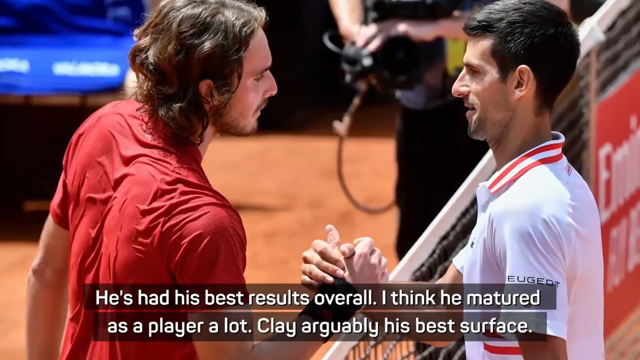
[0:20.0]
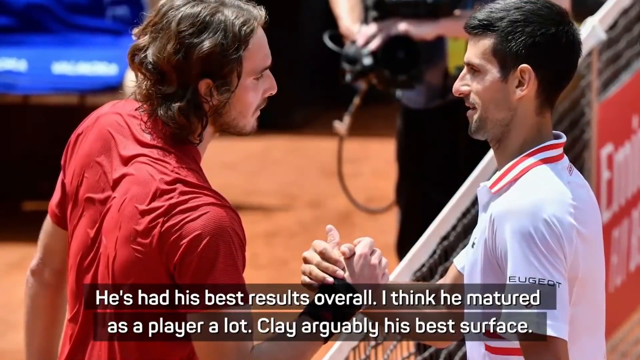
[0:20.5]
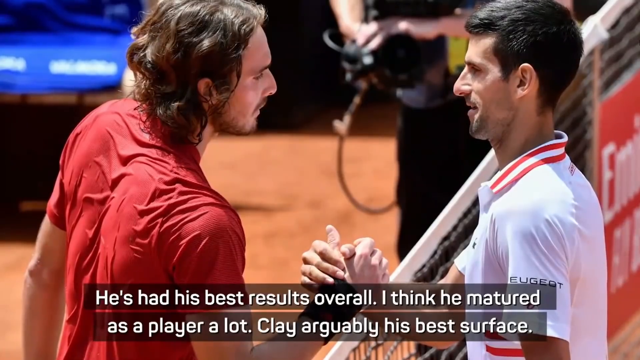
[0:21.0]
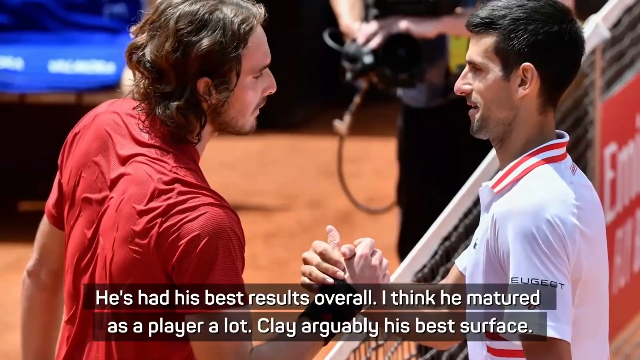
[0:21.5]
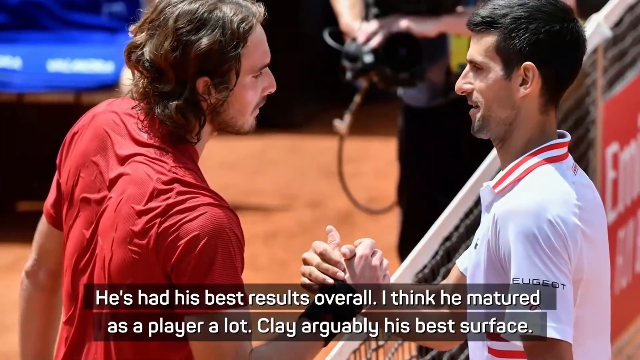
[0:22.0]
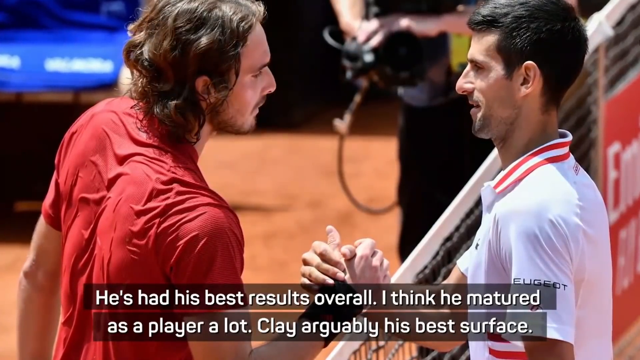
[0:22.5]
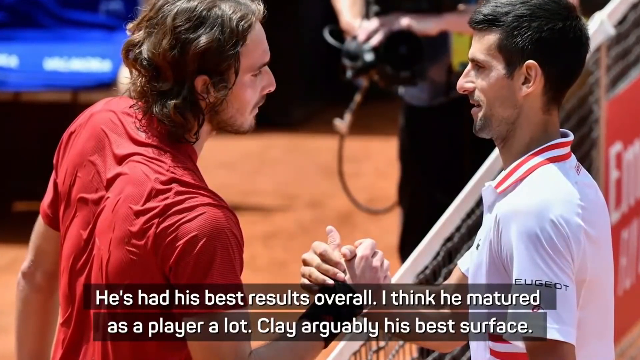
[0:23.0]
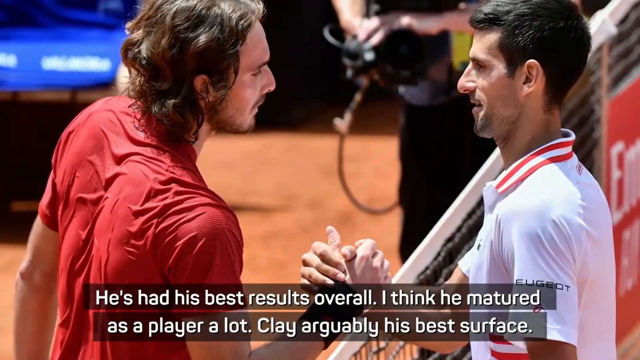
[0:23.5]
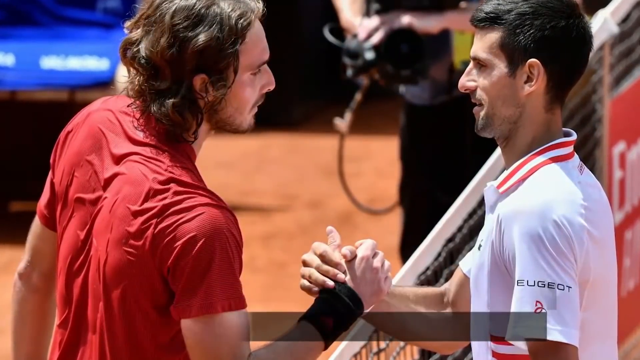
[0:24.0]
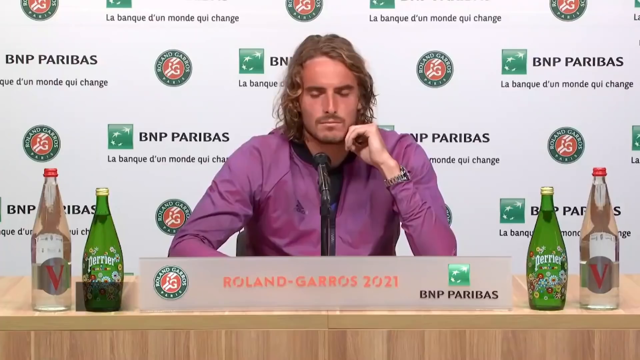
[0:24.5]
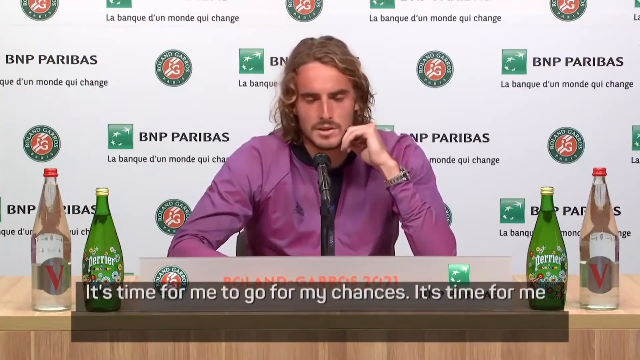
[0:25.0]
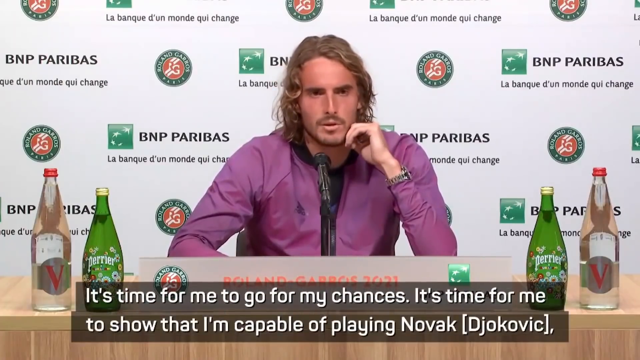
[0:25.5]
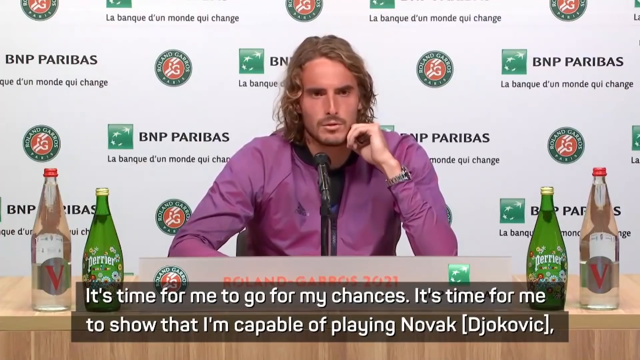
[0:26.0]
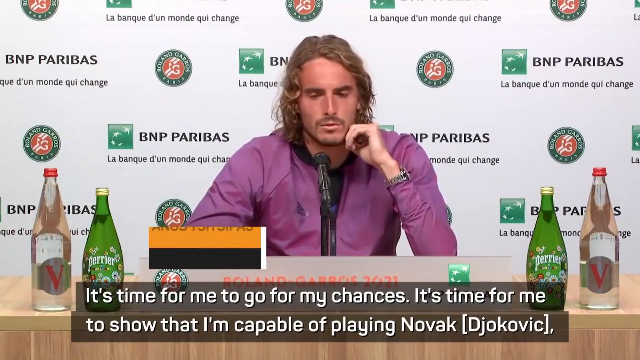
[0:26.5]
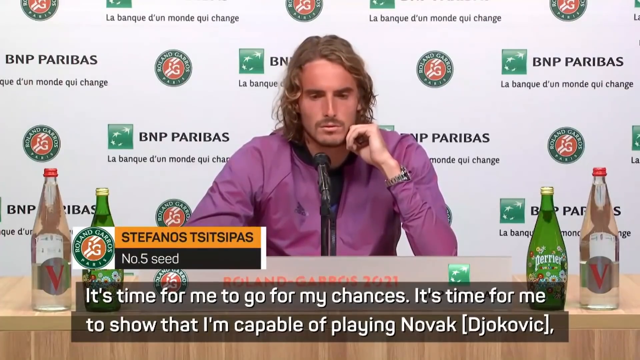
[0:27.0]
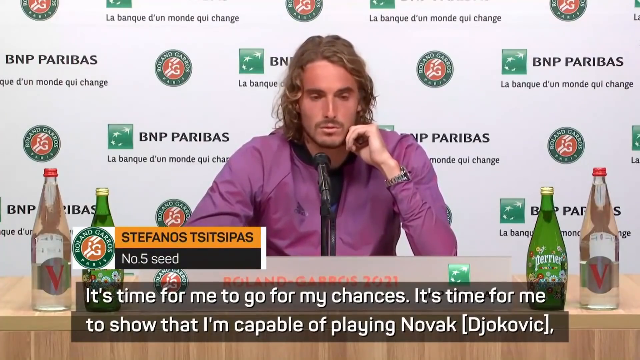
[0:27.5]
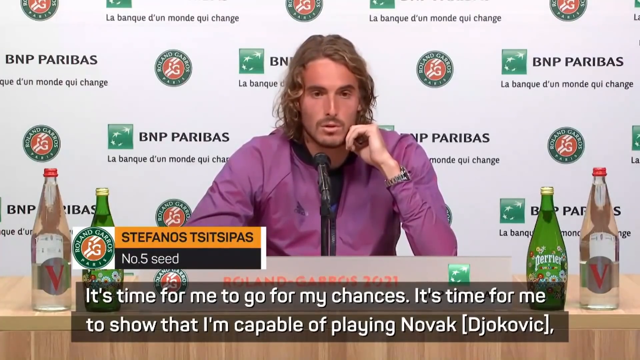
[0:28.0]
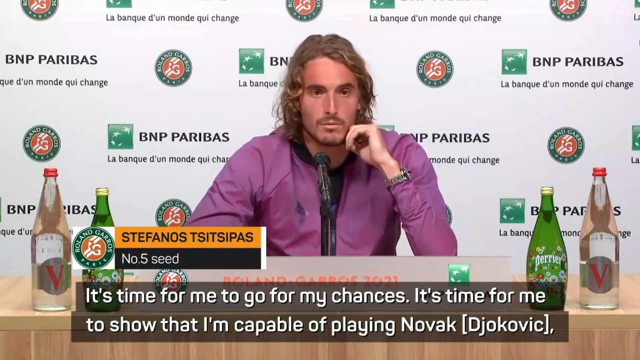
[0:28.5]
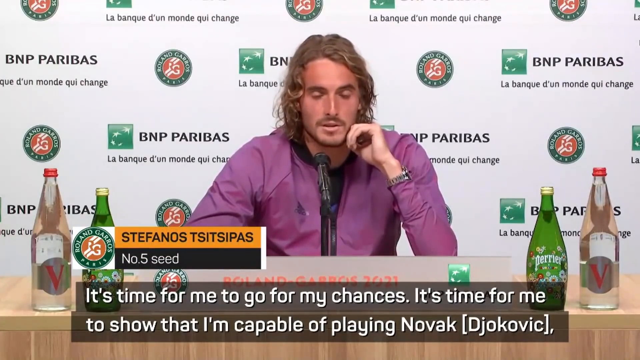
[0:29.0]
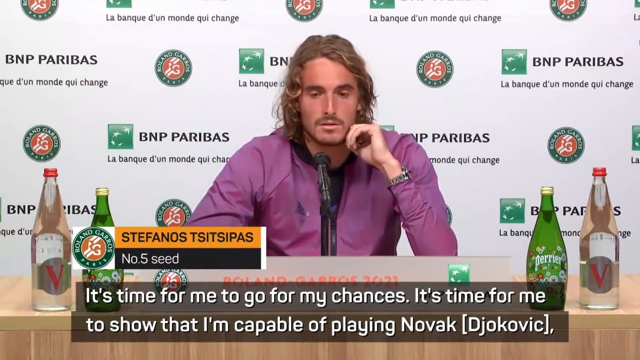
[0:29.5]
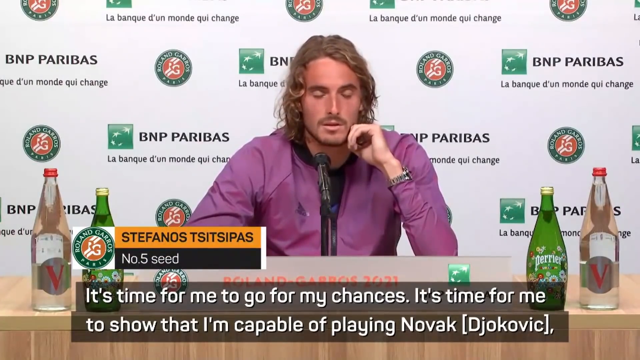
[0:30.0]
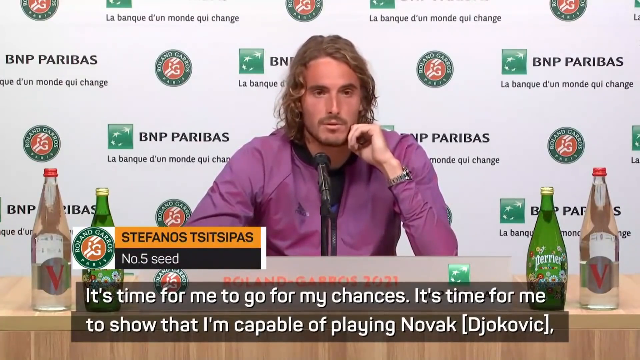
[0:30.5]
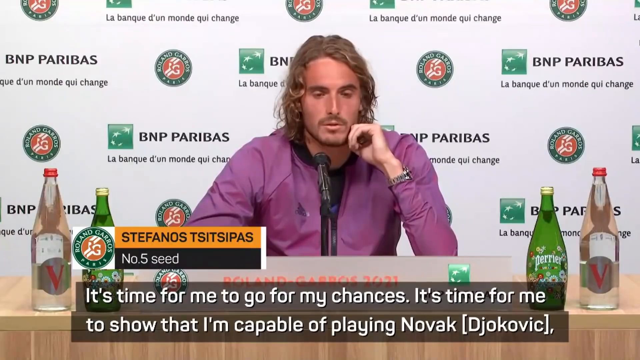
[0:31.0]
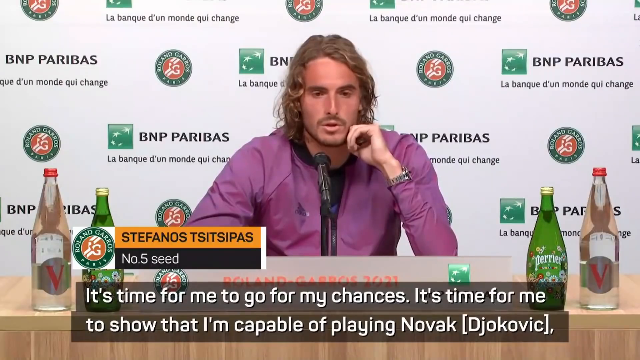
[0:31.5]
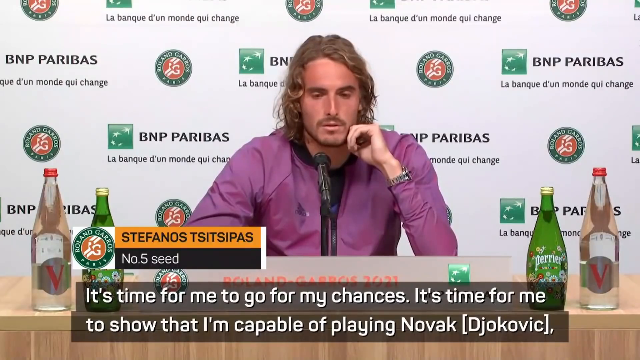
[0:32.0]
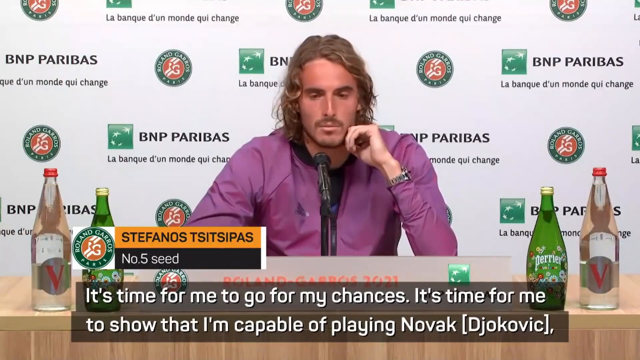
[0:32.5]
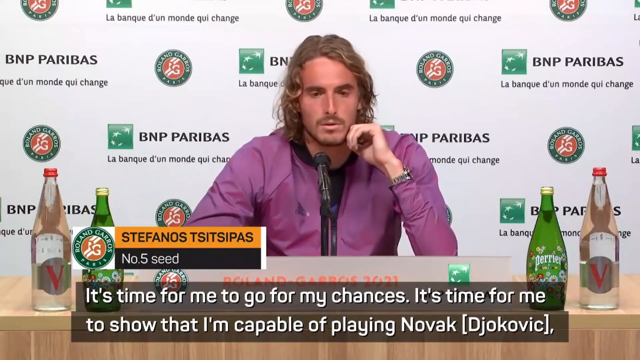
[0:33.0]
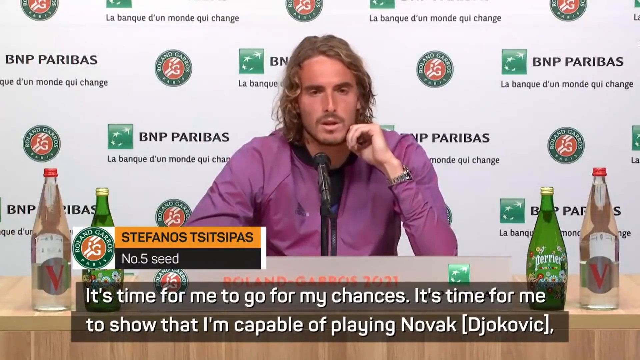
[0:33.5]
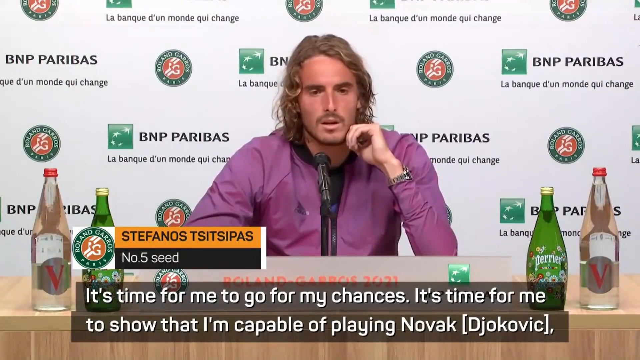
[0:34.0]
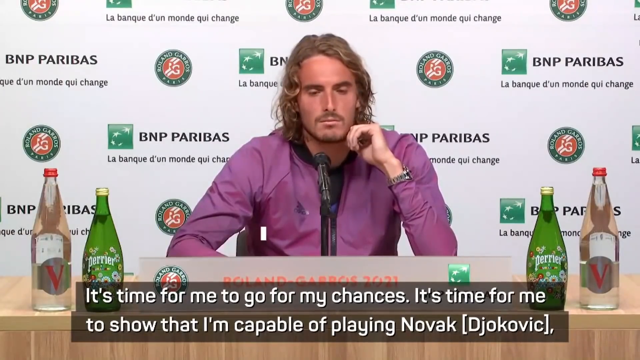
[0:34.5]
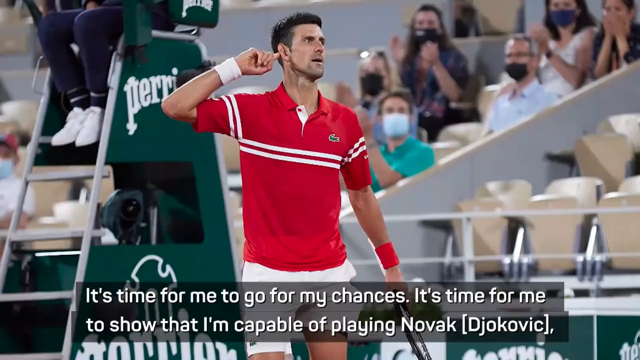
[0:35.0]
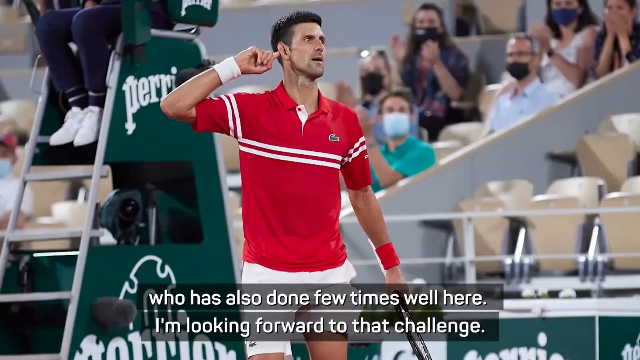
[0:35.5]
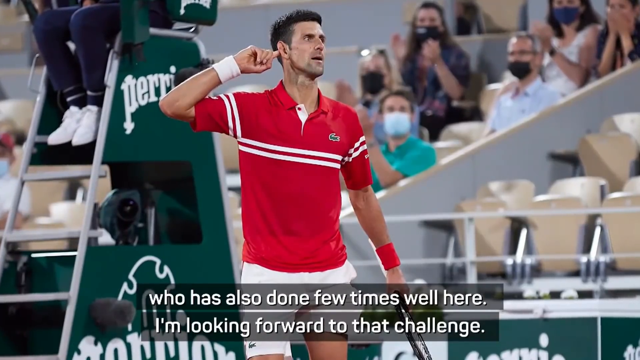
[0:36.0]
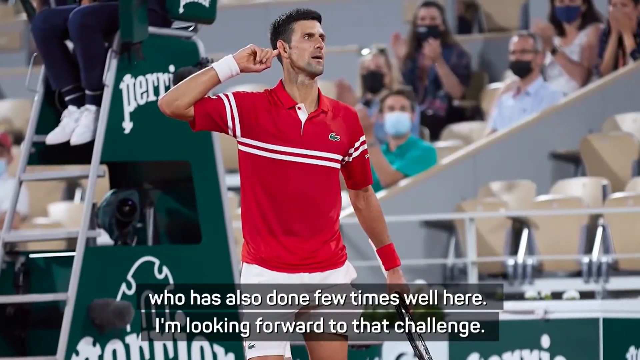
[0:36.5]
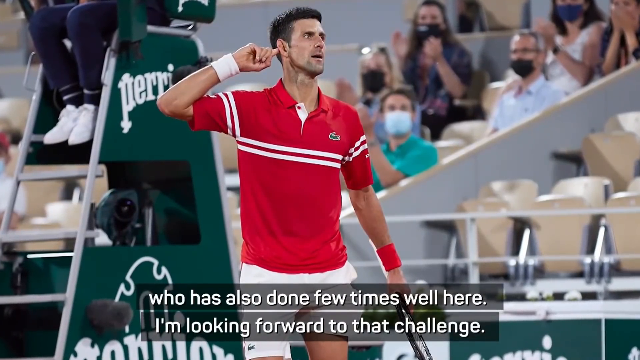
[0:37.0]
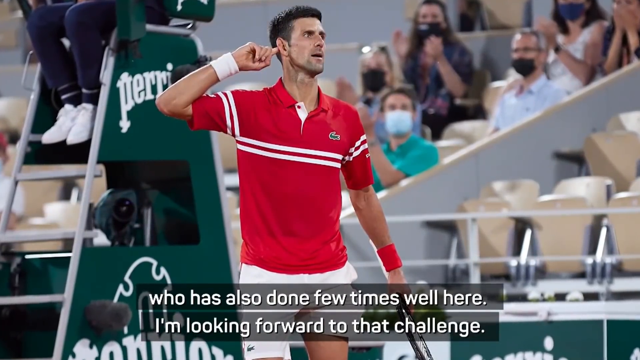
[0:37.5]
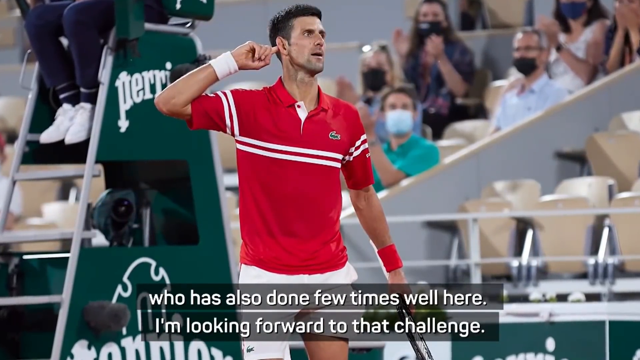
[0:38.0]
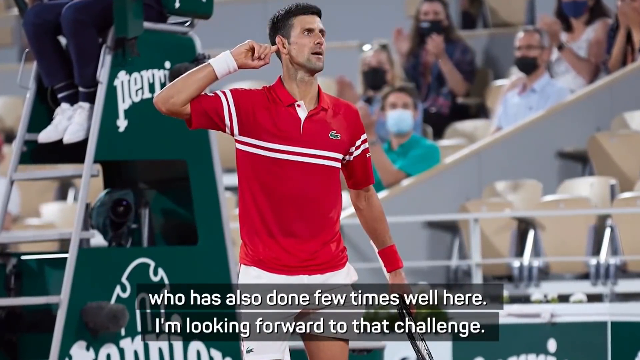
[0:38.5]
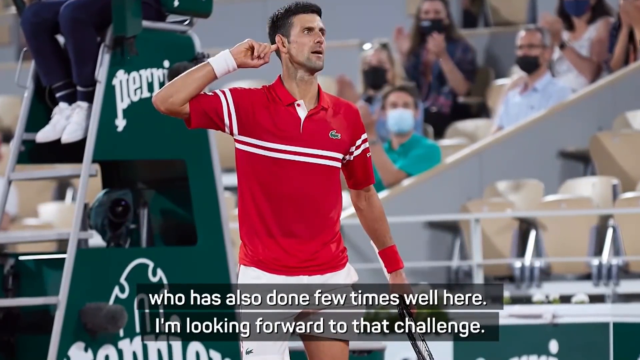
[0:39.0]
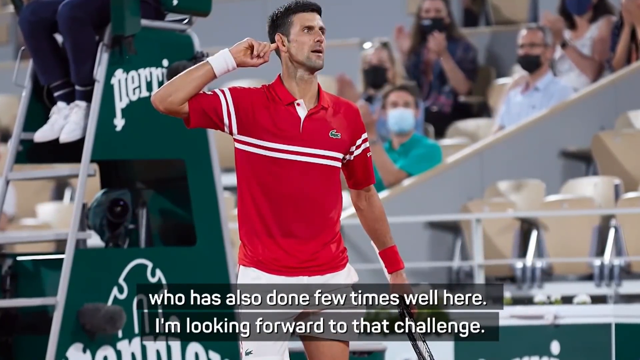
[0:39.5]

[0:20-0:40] The still image of the two players clasping right hands over the tennis net is on screen. Then the other player is interviewed. He wears a purple zip-up sweater of some sort and has long, wavy, almost dirty blonde hair. He sits in front of a microphone on a stand, with bottles of beverages on both sides of him. Both arms are on the table: his right arm lies on the table, while his left arm is bent at the elbow and his left hand kind of rests against his left jaw. He wears a watch on his left arm. He nods and starts to answer, looks down a few times, looks up, and makes a gesture with his hand. Then it cuts to a still picture of his opponent on the tennis court, wearing a red shirt with two white horizontal stripes across it. The opponent's right arm is bent at the elbow with his finger appearing to point to his ear, and his left arm hangs down by his side.